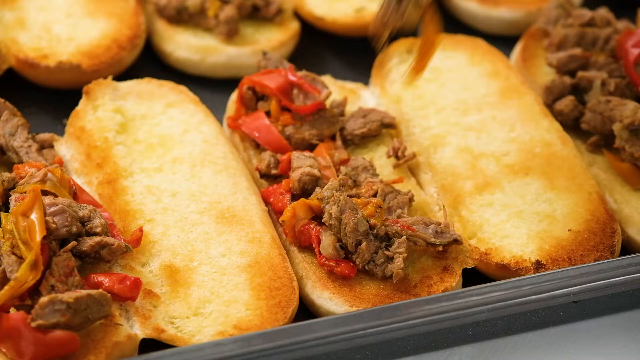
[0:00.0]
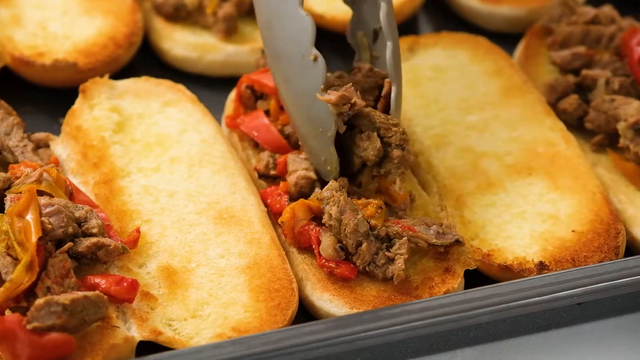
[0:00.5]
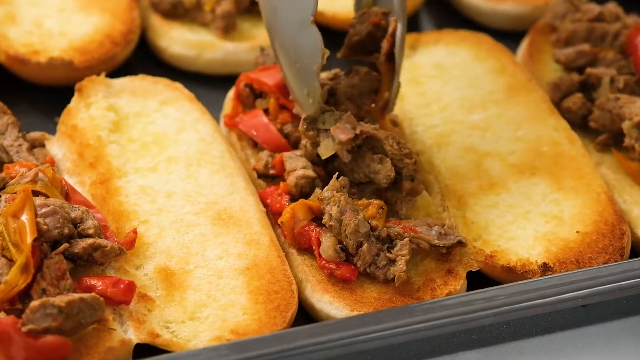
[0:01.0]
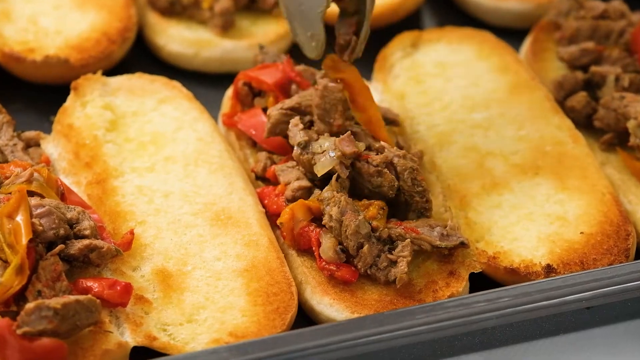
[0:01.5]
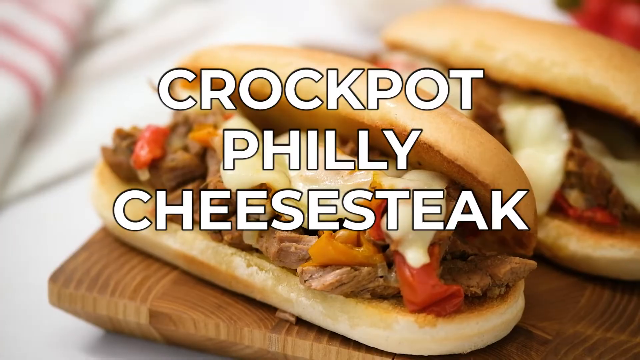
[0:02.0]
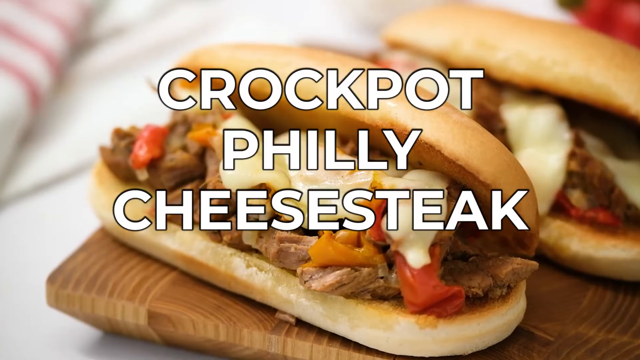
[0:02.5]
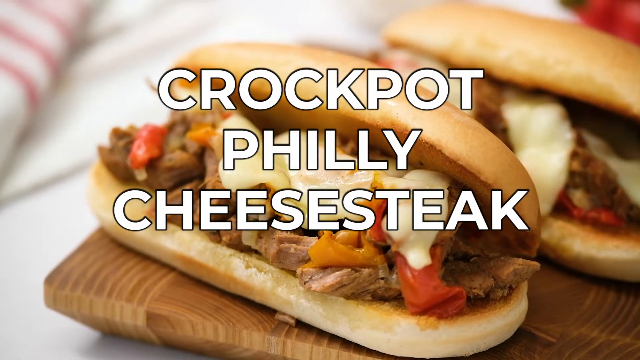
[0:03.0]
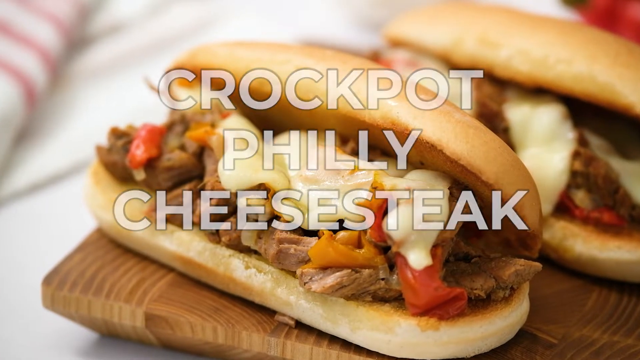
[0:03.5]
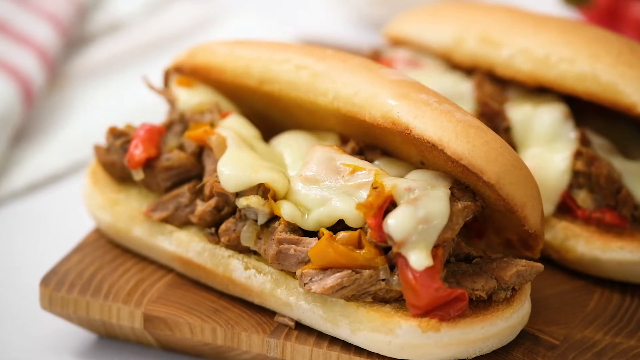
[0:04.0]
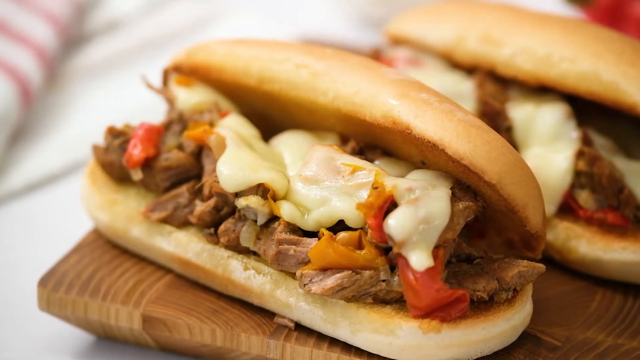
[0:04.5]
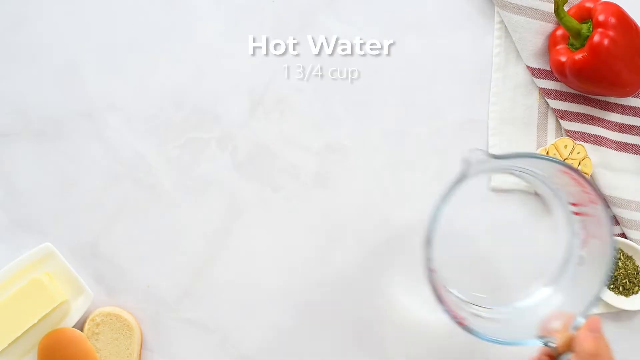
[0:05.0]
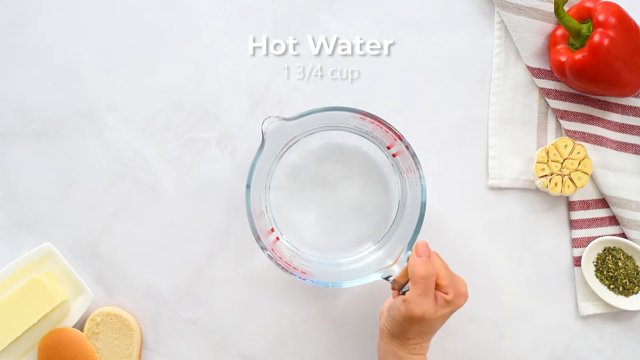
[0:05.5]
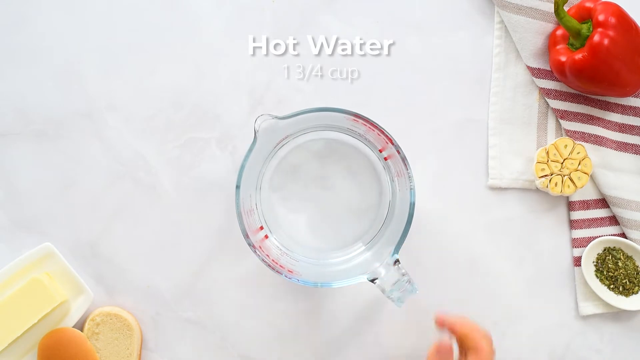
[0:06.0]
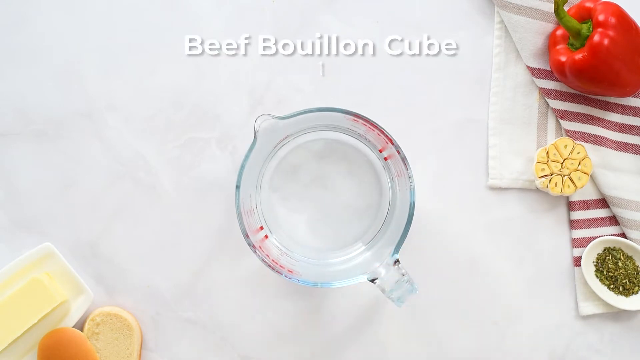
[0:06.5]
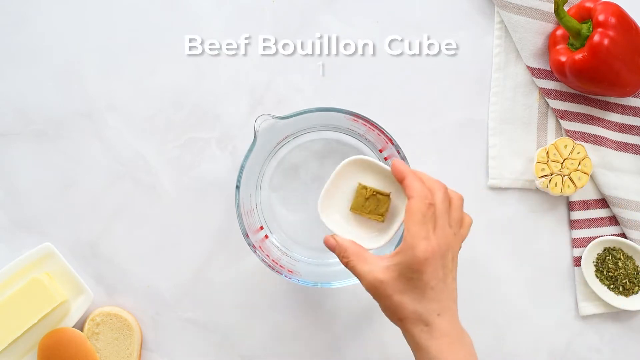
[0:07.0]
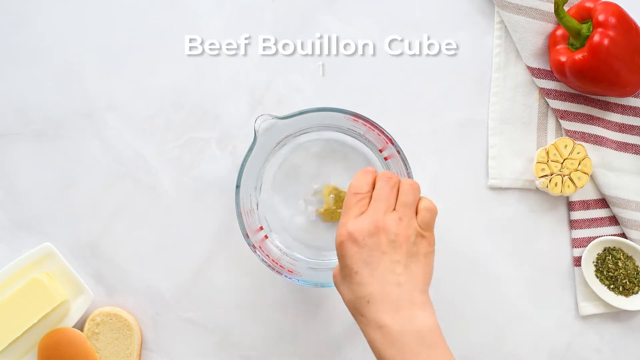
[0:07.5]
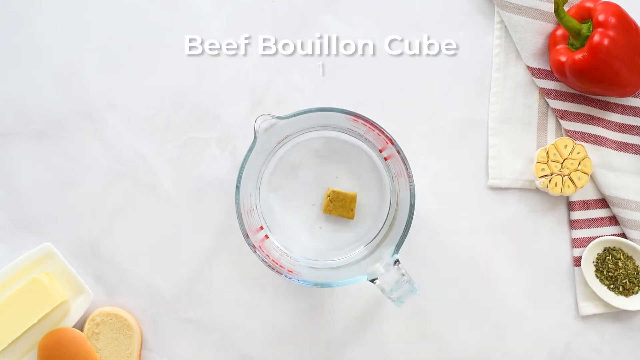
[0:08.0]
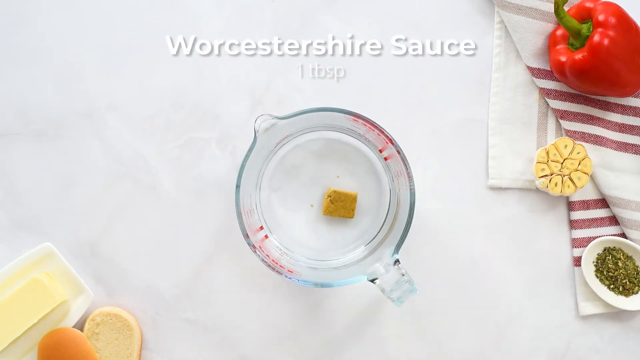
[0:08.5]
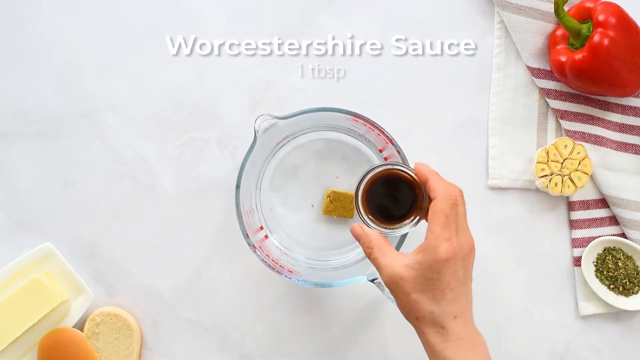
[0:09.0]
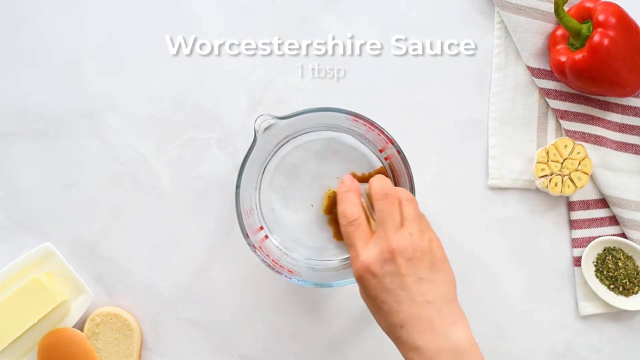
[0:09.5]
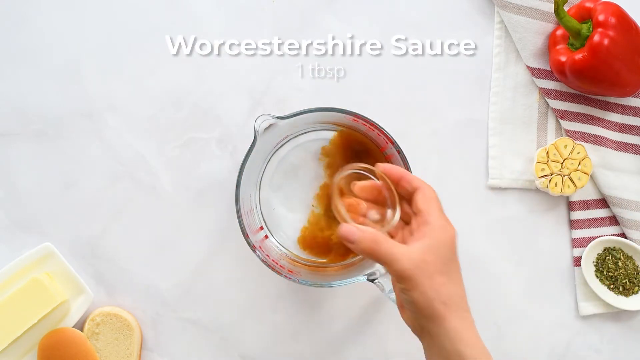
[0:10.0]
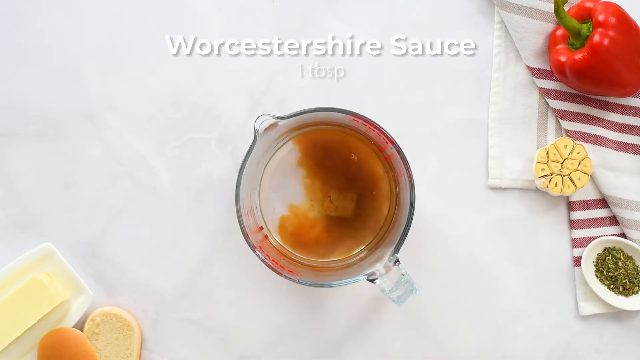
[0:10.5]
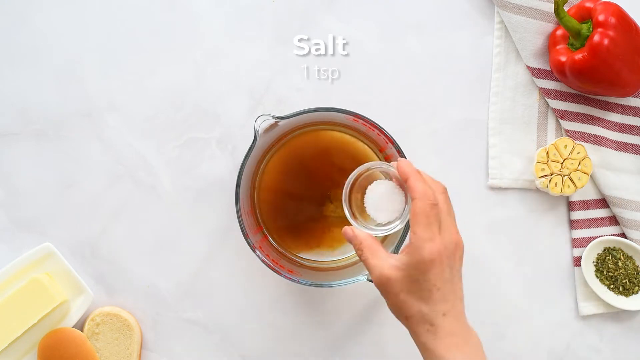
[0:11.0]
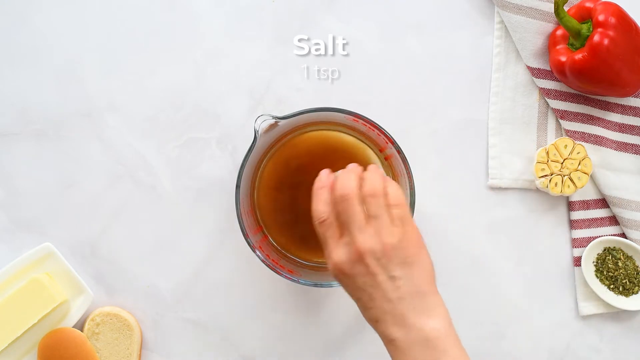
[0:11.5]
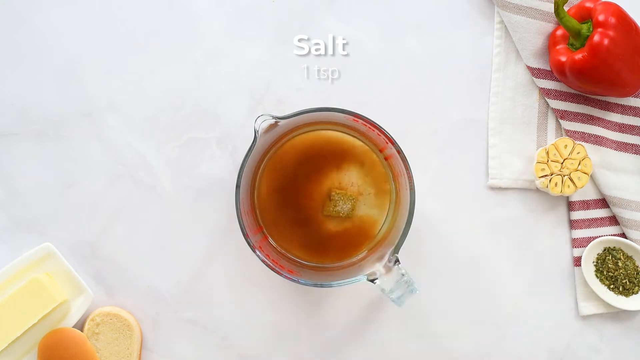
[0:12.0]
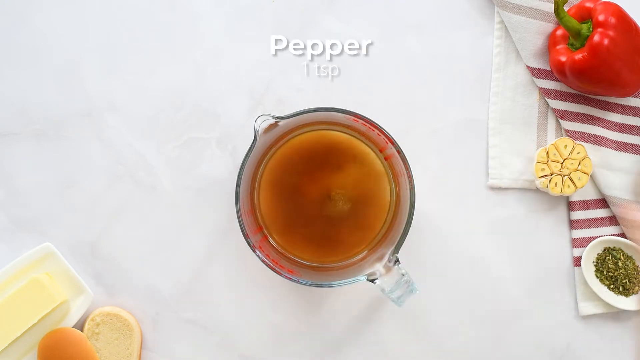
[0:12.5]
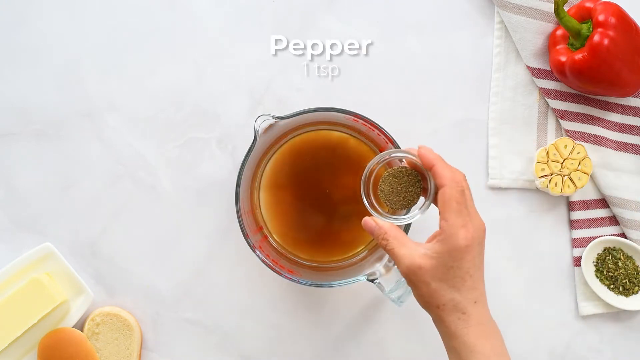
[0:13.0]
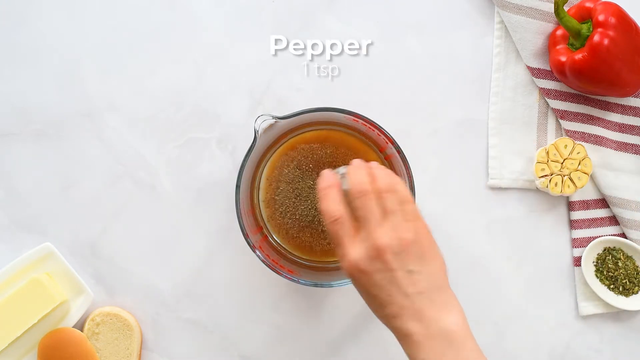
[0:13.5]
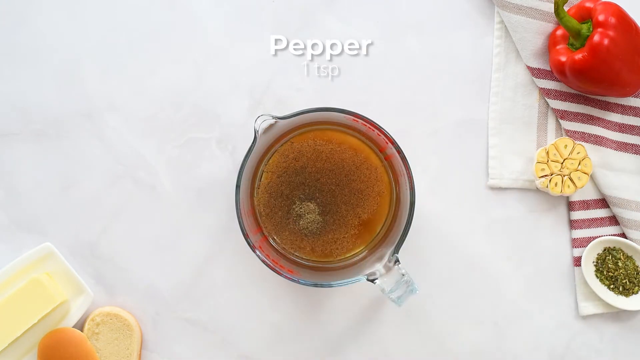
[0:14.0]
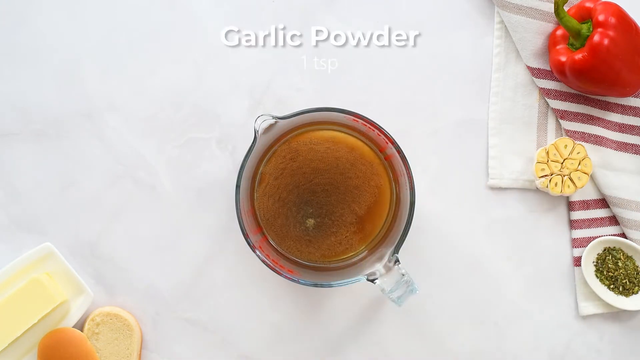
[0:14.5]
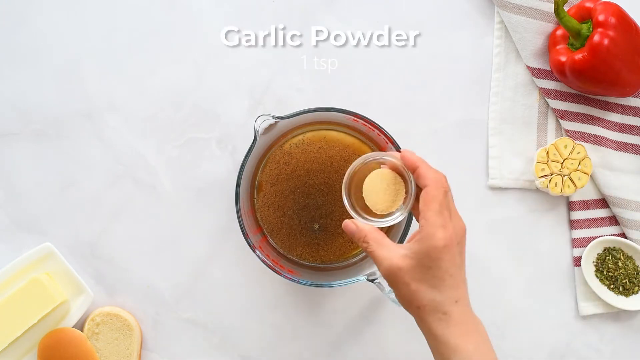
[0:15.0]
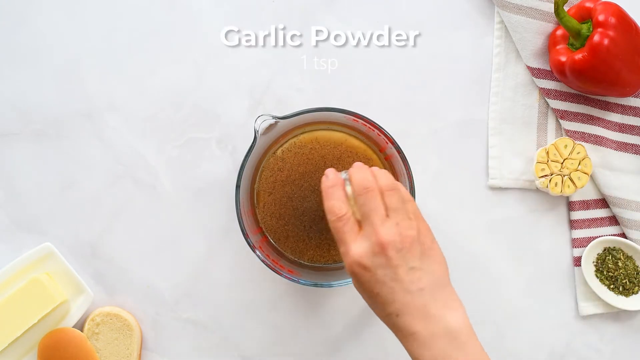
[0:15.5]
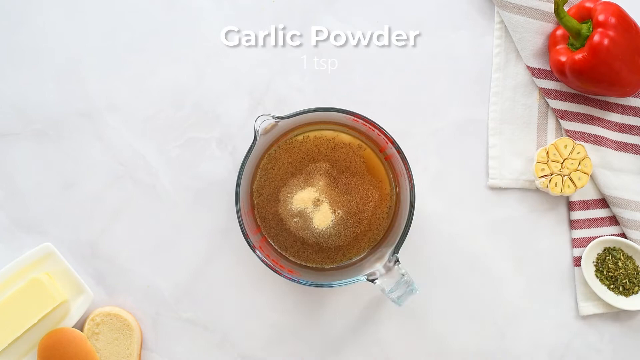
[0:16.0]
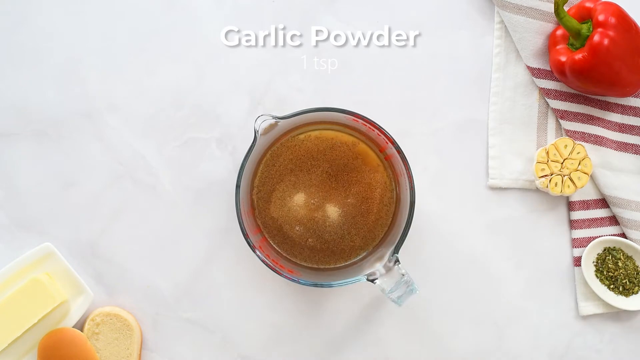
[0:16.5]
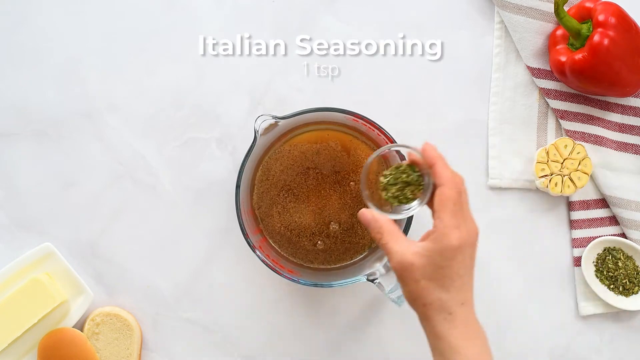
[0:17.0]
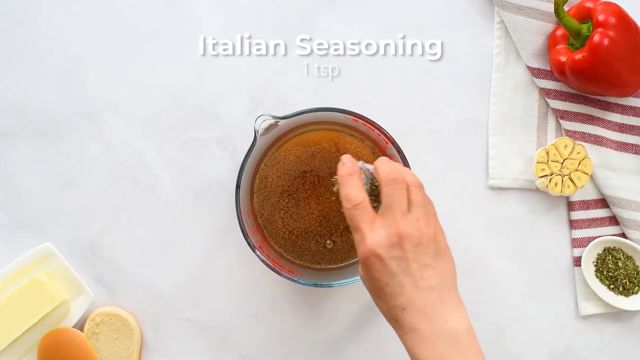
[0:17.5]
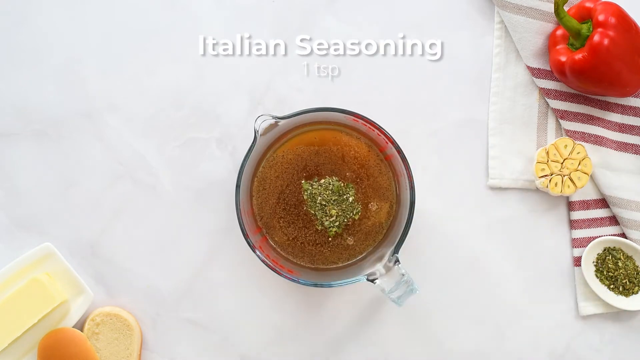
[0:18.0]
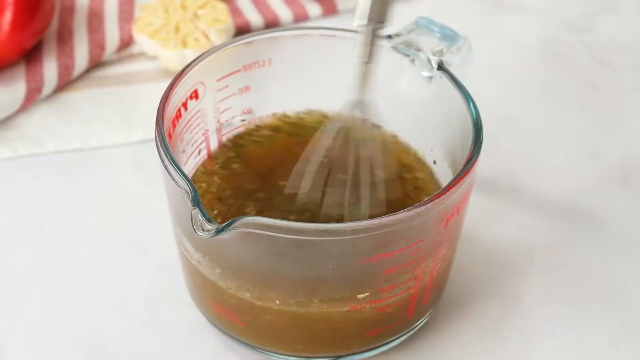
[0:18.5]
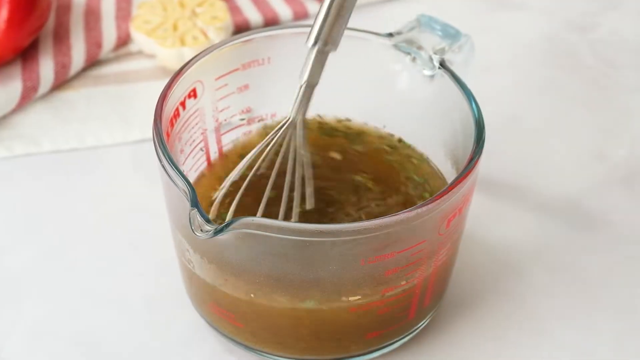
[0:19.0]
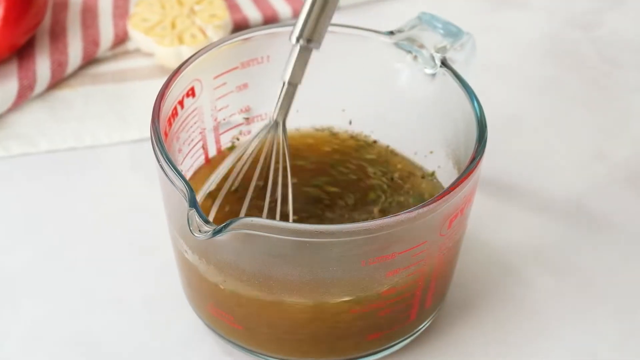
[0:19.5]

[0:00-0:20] A tray is lined with open toasted hot dog buns, covered on one side with shreds of meat and red peppers. Tongs place more meat on one of the buns. The shot cuts to two of the buns stuffed with meat, peppers, and cheese, with the text "crockpot philly cheesesteak". Next comes a top-down view of a table with assorted items on the edge. A person brings in a large glass measuring cup filled with hot water. They bring in a small dish of beef bouillon and pour it into the water, then a small dish of Worcestershire sauce, pouring it in as well. Another dish adds a little salt, another adds some pepper, another adds garlic powder, and then Italian seasoning. The view cuts to a different angle of the measuring cup as a whisk mixes the ingredients.